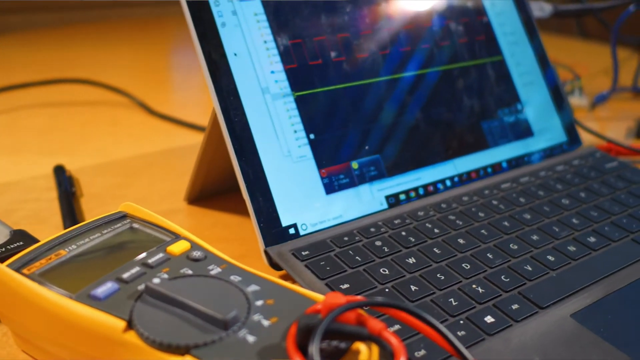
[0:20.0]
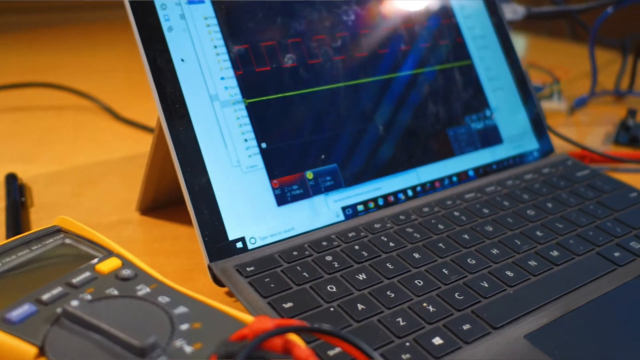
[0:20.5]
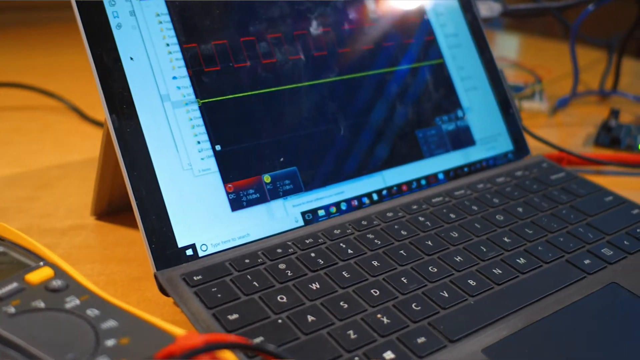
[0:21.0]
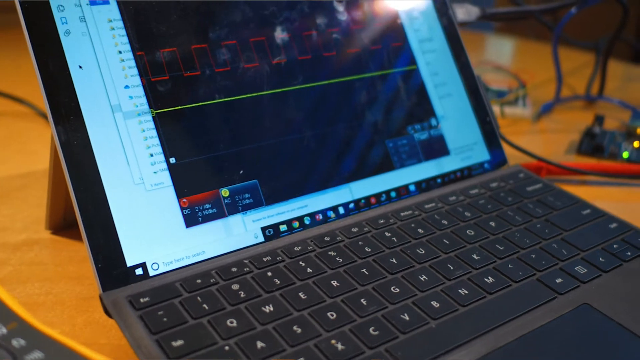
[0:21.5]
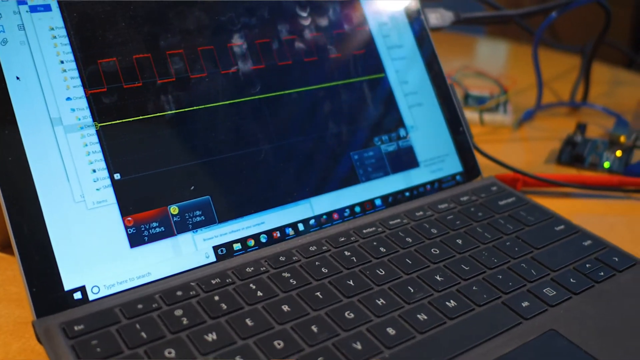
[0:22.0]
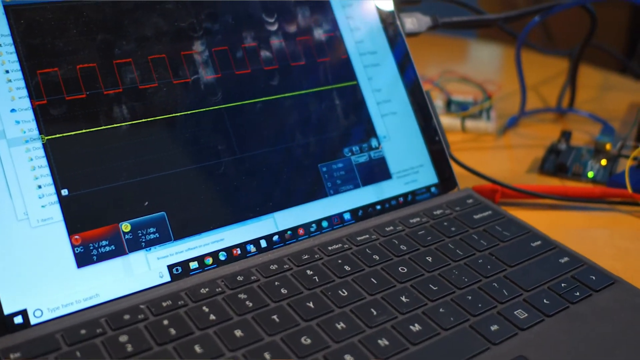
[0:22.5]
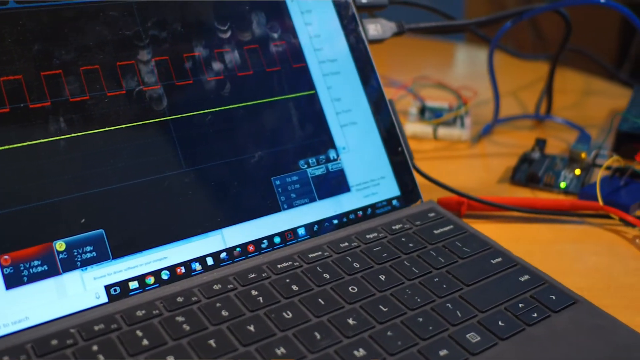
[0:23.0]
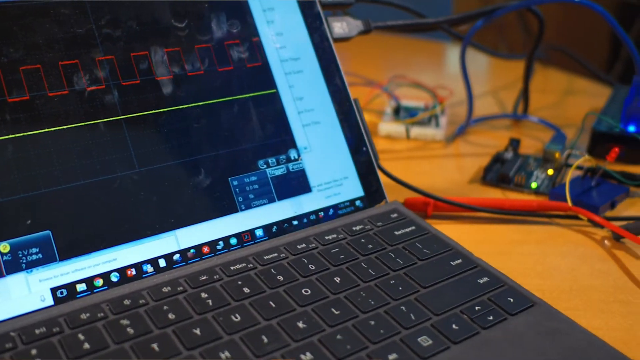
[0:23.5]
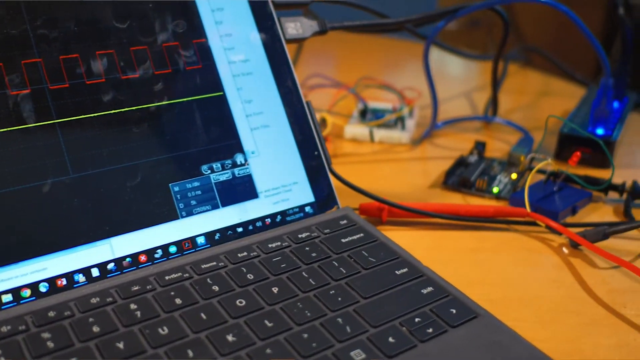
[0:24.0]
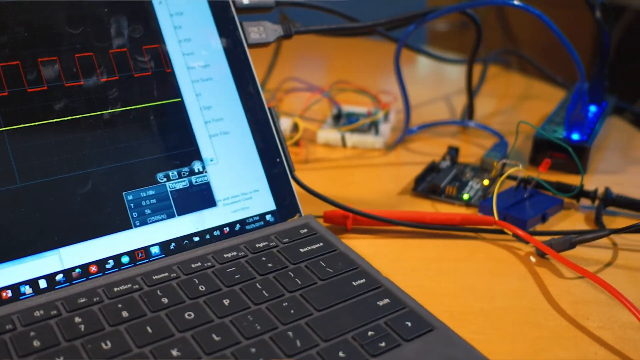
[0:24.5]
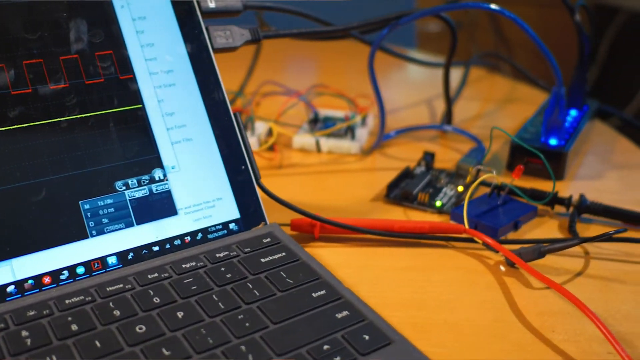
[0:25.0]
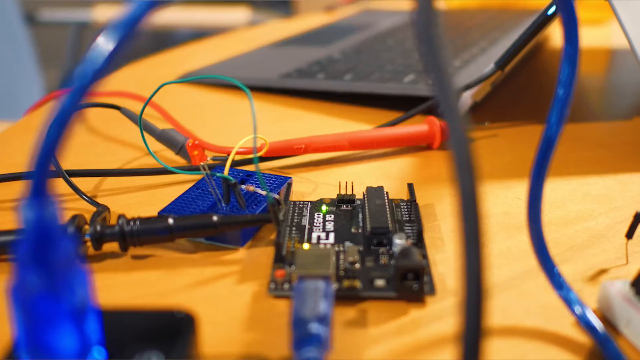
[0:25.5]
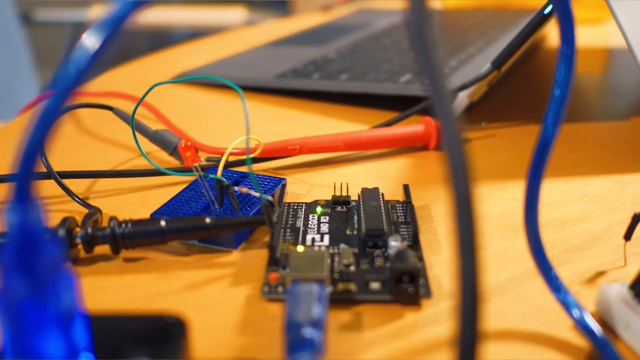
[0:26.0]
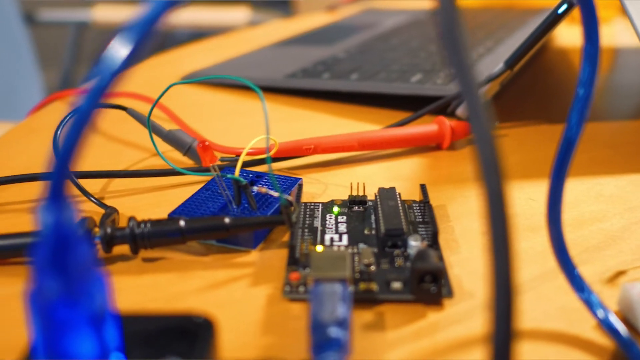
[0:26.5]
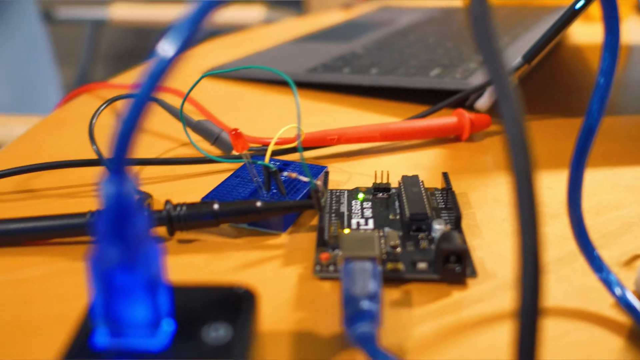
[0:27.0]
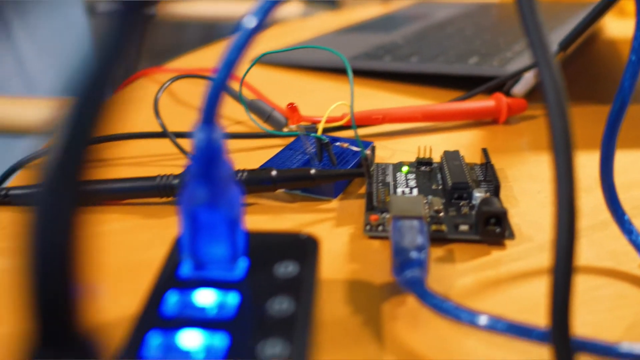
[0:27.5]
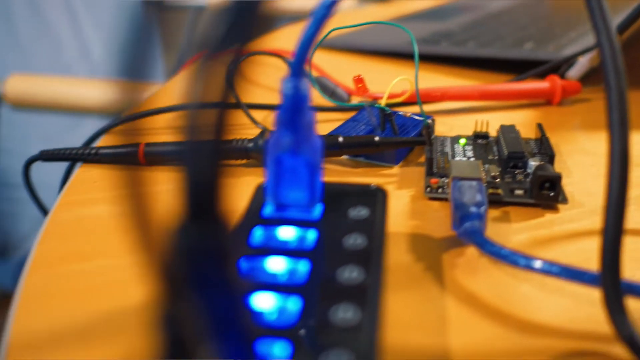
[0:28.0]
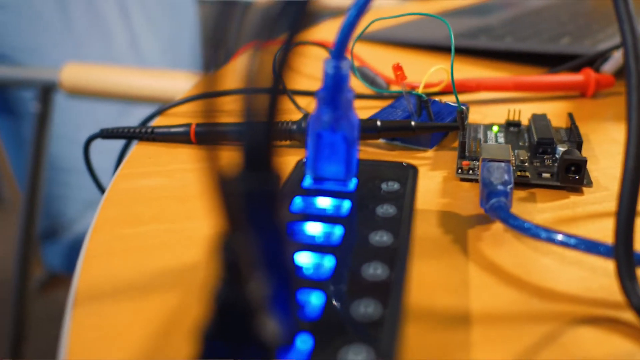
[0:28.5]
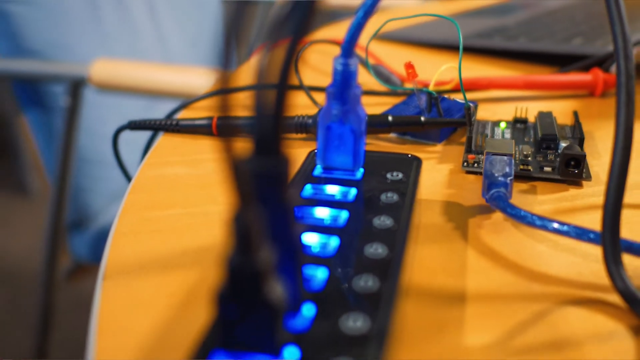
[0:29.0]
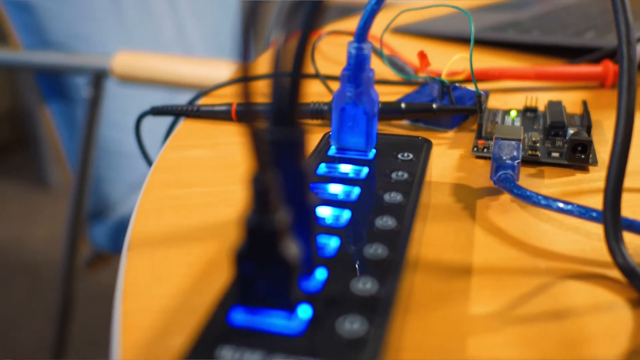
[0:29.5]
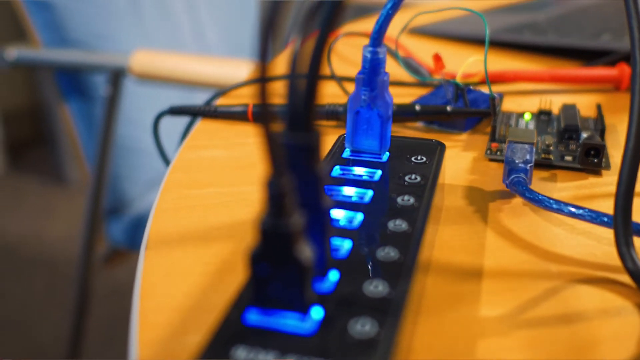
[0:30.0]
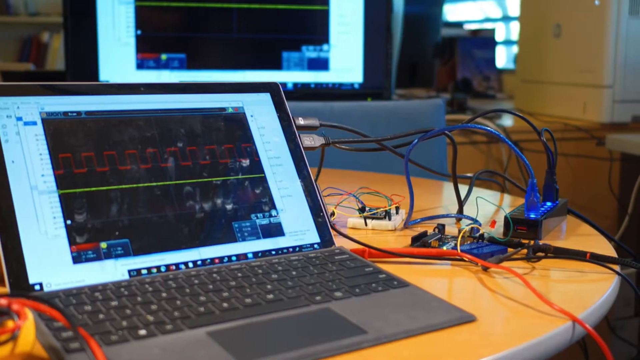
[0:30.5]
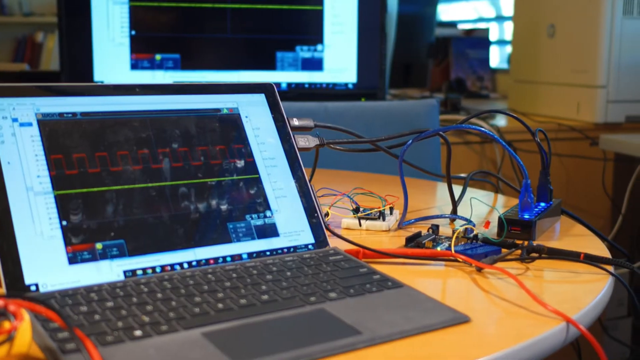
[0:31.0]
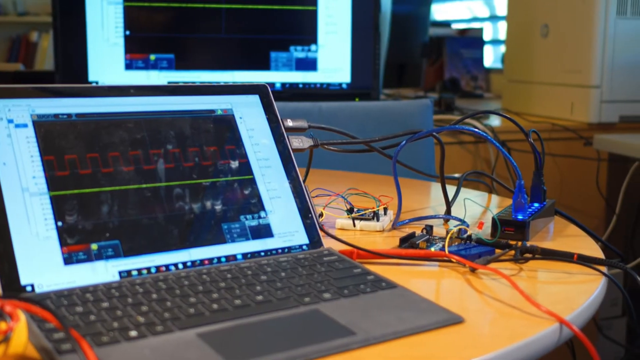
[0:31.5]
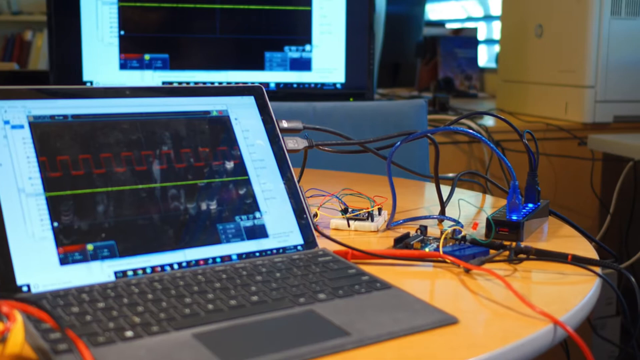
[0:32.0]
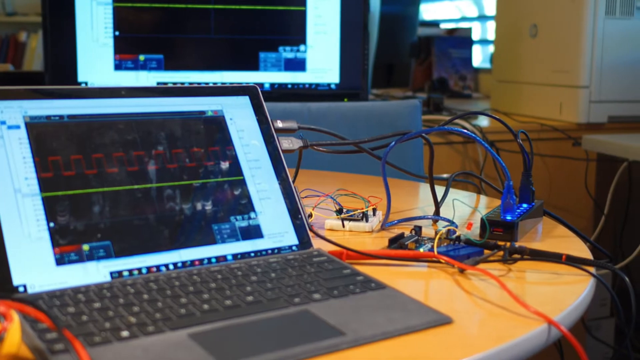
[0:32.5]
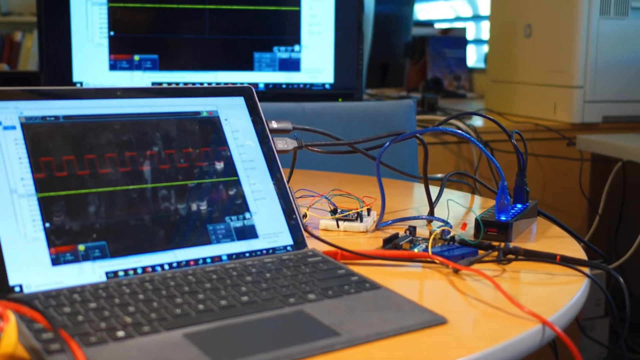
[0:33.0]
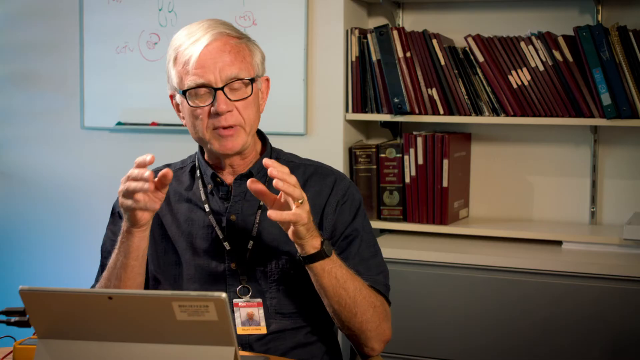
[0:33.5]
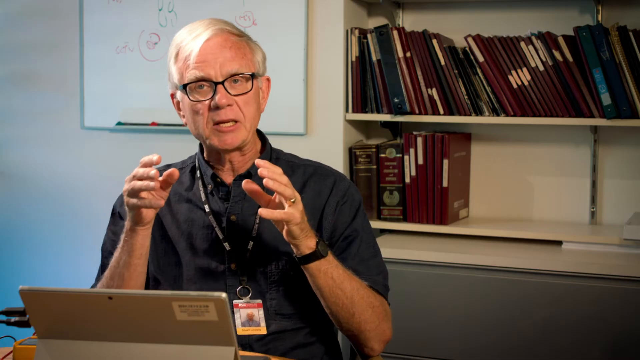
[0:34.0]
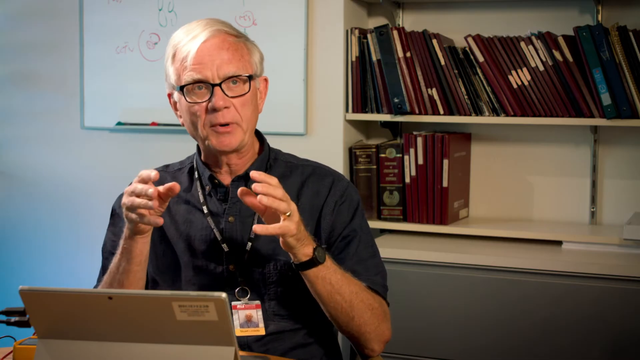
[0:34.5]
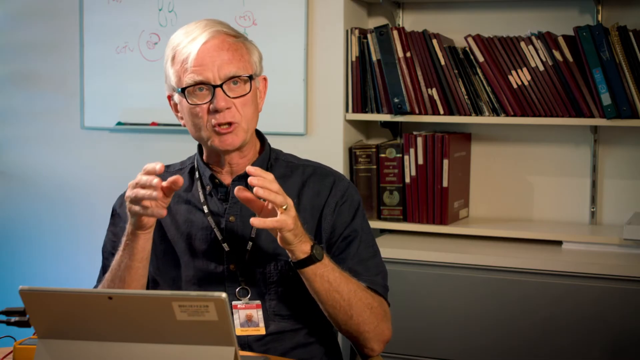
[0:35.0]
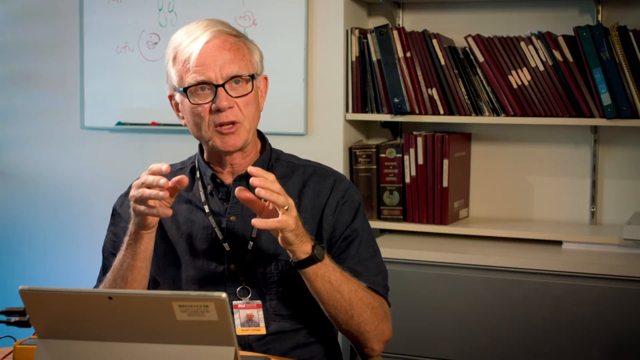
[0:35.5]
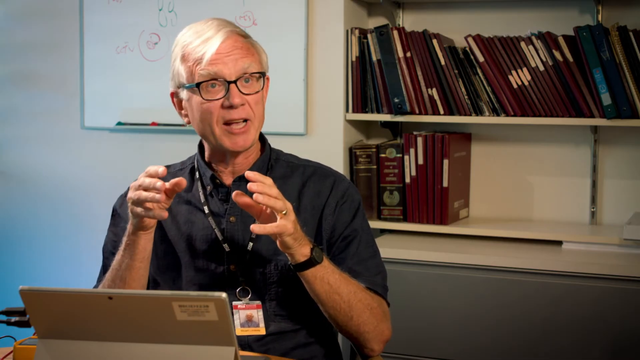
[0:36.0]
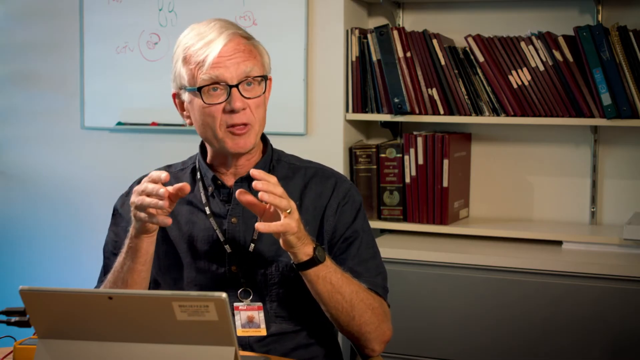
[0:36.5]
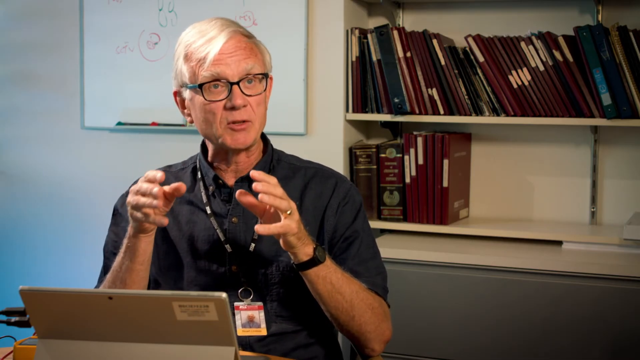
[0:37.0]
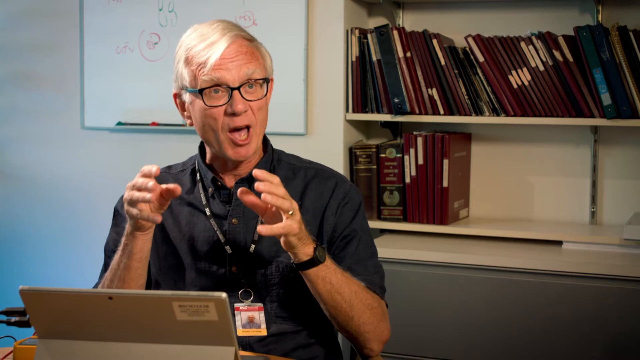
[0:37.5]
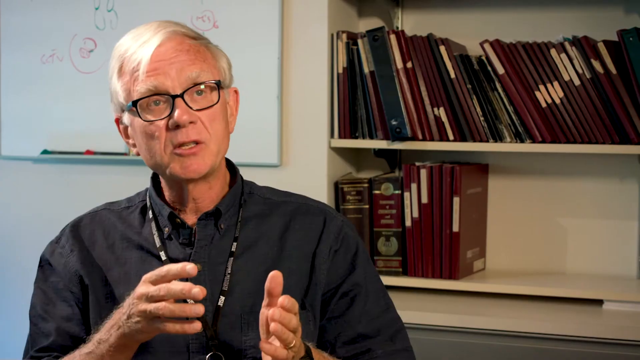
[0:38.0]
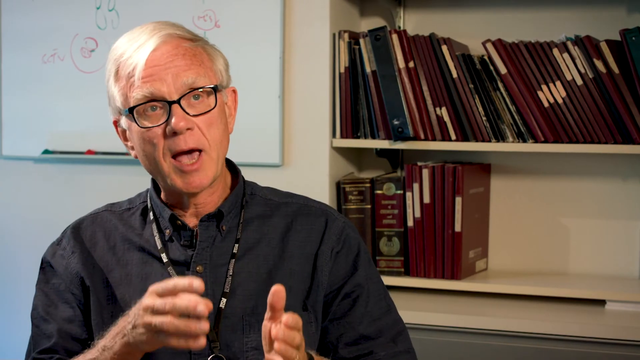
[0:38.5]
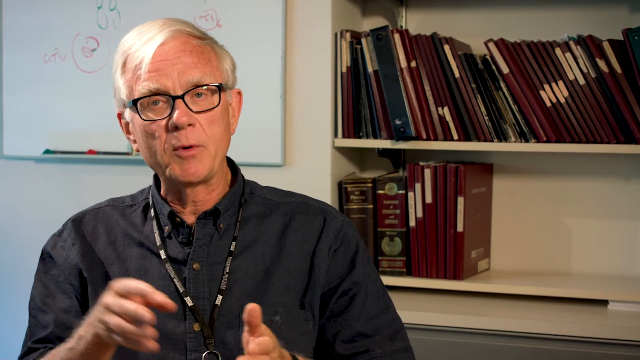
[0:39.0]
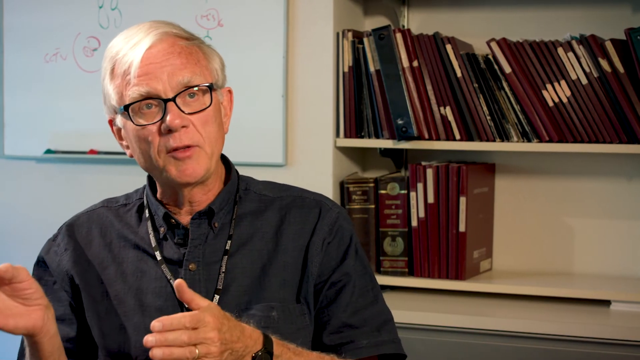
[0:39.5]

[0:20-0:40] The camera scans a very neat and clean laptop from left to right, showing the table and some kind of electronic cables, including blue cables, plugged into something that looks like a surge protector. The video cuts to the man speaking, moving his hands from the center a little to the left and to the right. To the right of his computer are circuit boards with things plugged in: black plugs and a blue plug connected to a black, circuit-breaker-looking device with blue lights. It cuts back to him talking. The table has silver around the edges and is a light wood color, the kind seen in schools.